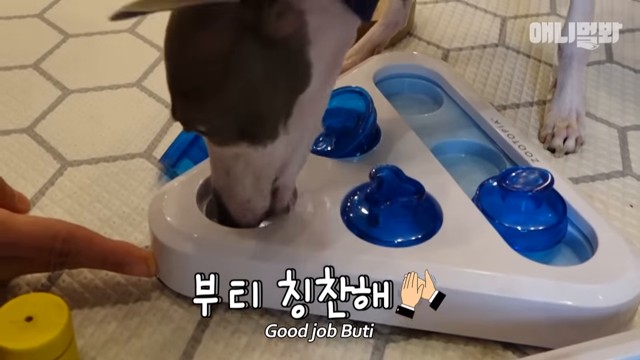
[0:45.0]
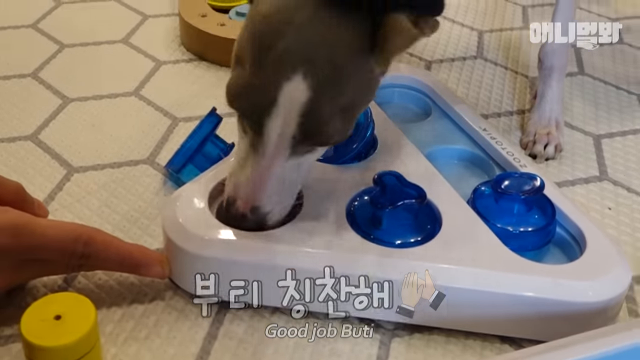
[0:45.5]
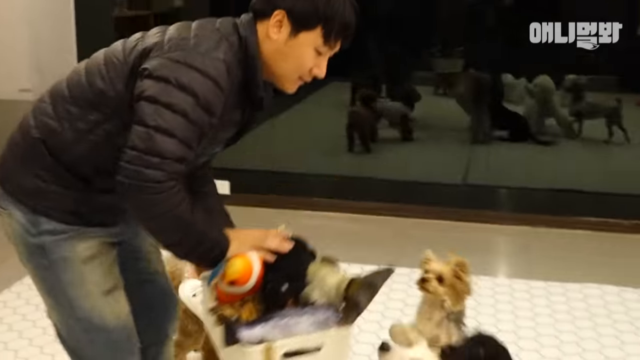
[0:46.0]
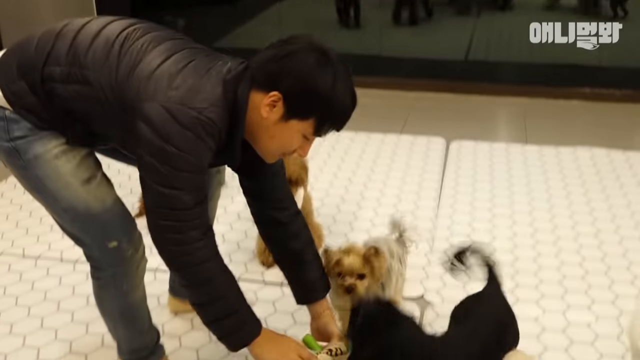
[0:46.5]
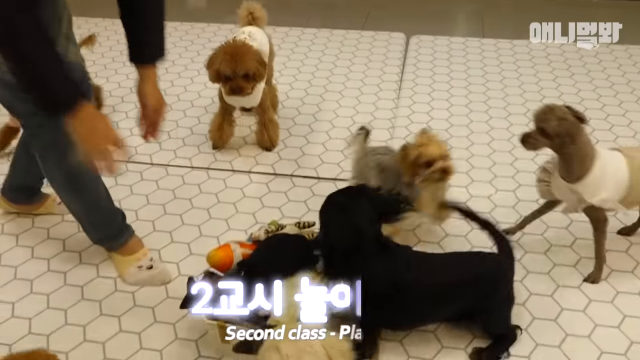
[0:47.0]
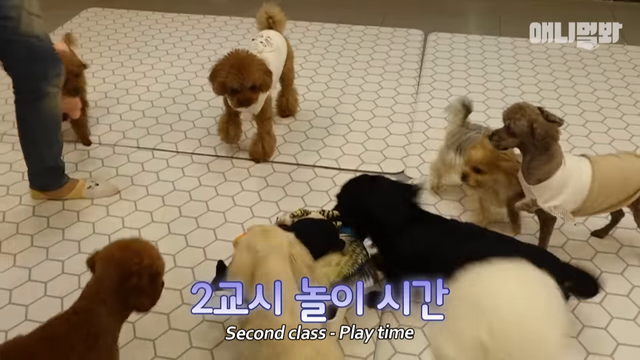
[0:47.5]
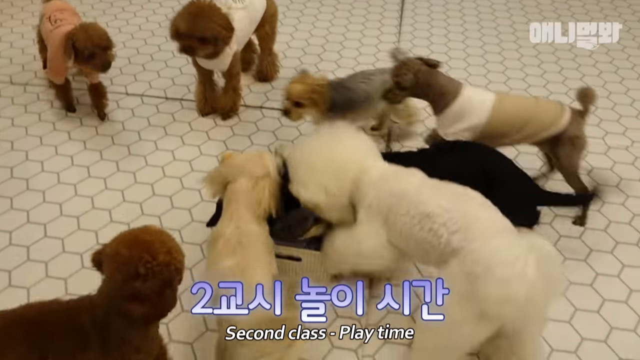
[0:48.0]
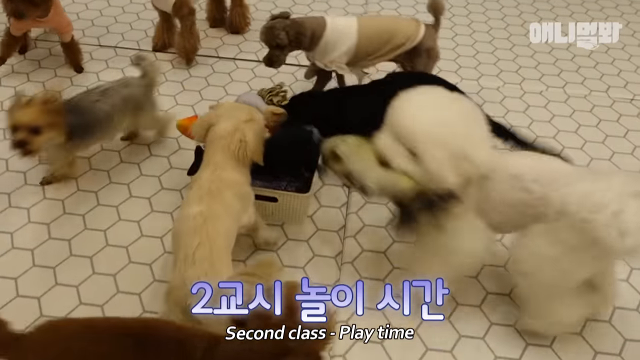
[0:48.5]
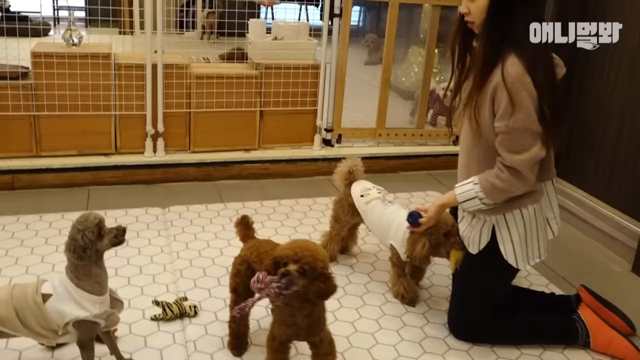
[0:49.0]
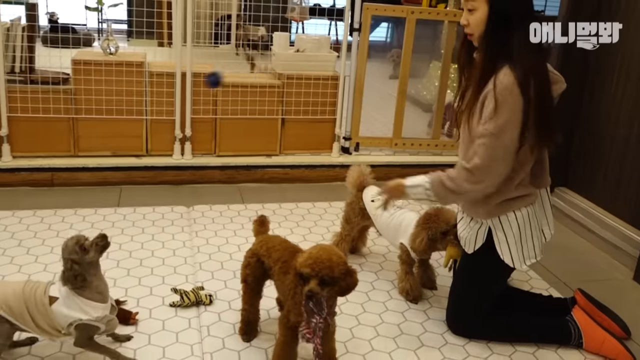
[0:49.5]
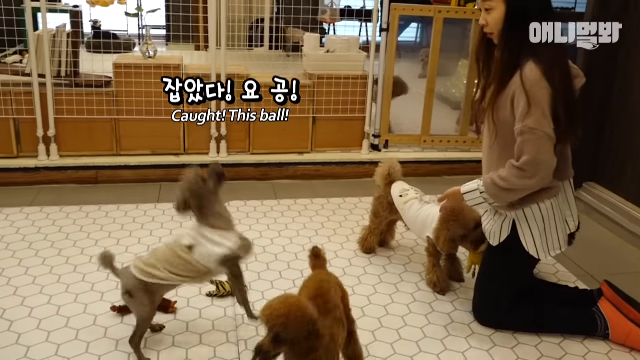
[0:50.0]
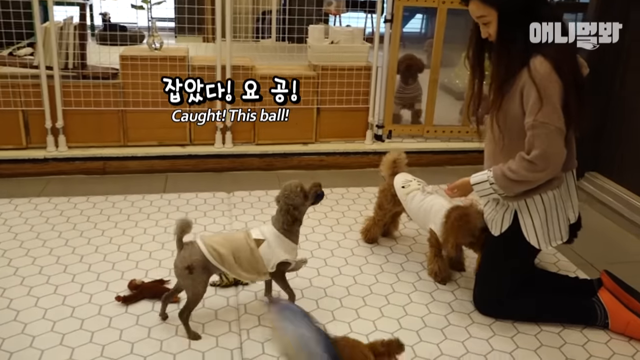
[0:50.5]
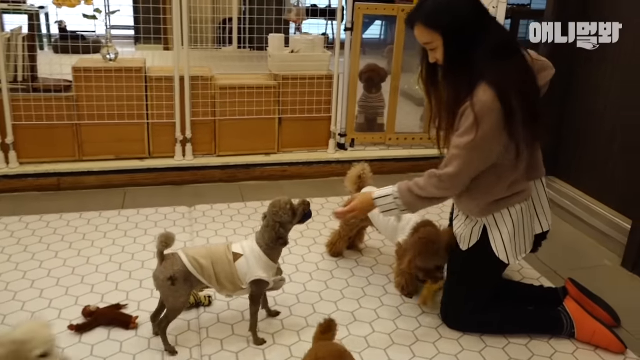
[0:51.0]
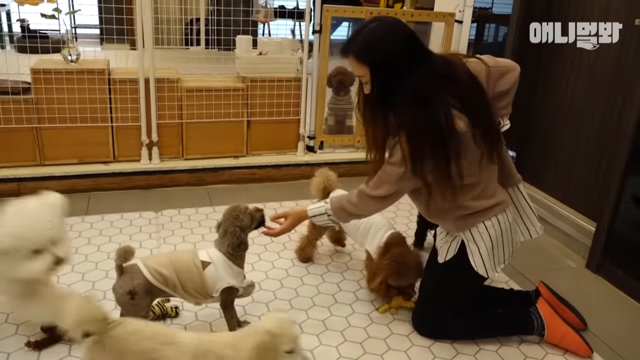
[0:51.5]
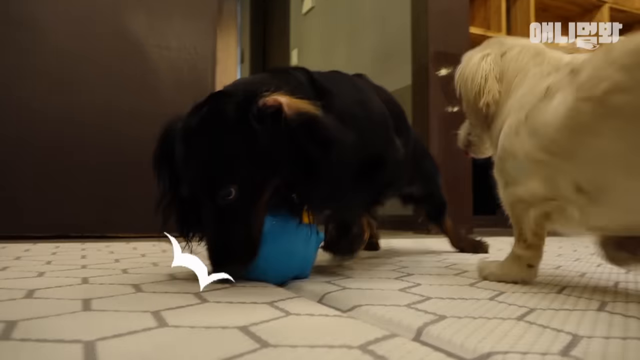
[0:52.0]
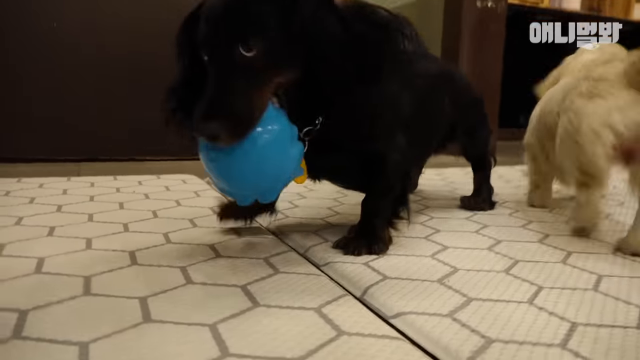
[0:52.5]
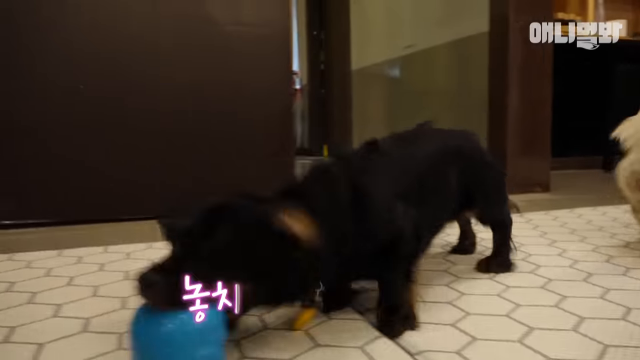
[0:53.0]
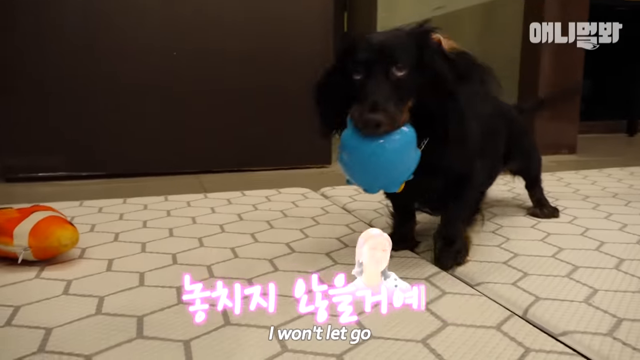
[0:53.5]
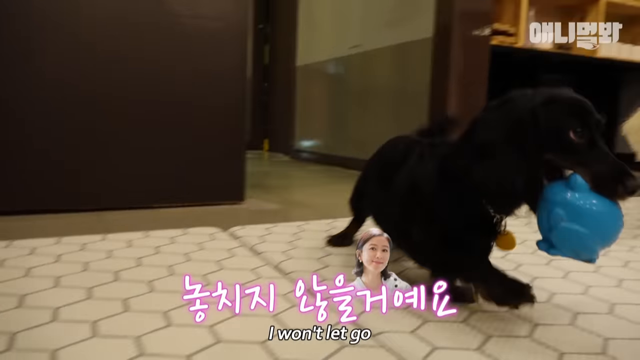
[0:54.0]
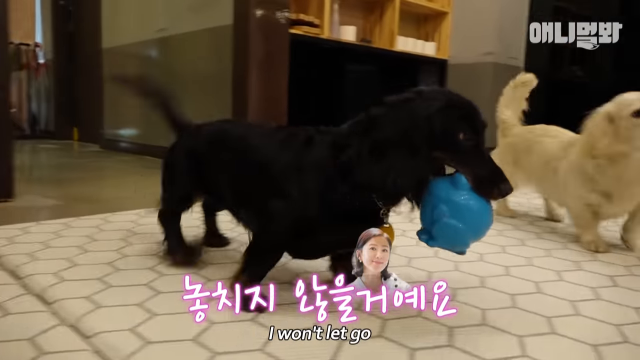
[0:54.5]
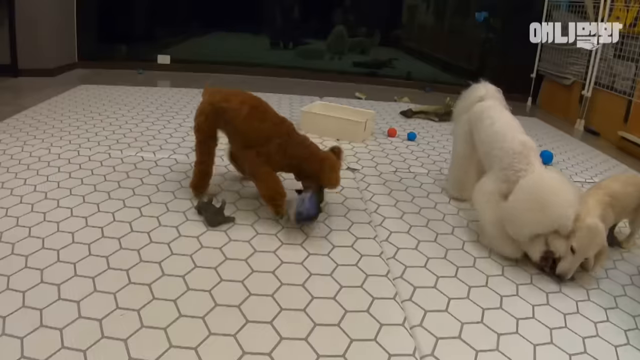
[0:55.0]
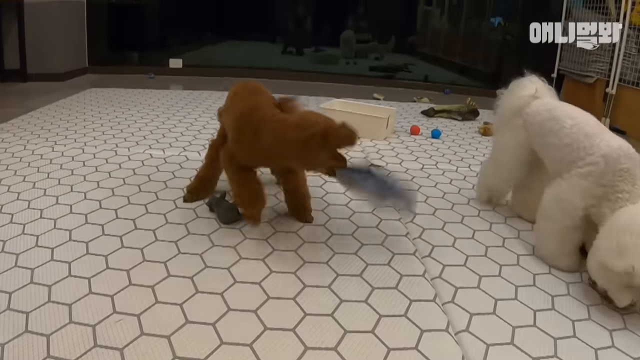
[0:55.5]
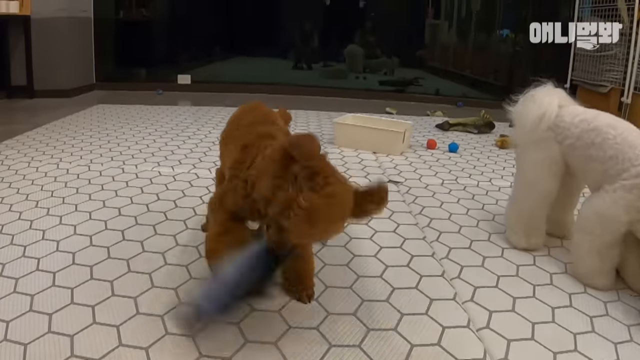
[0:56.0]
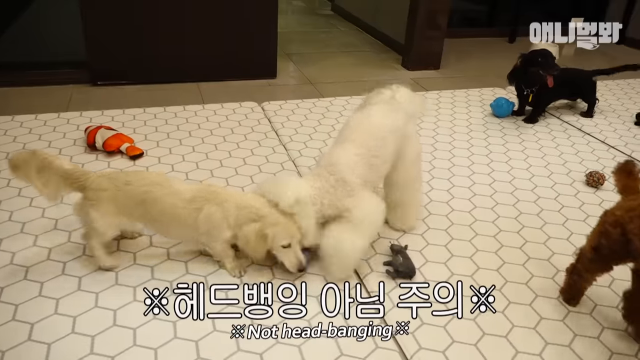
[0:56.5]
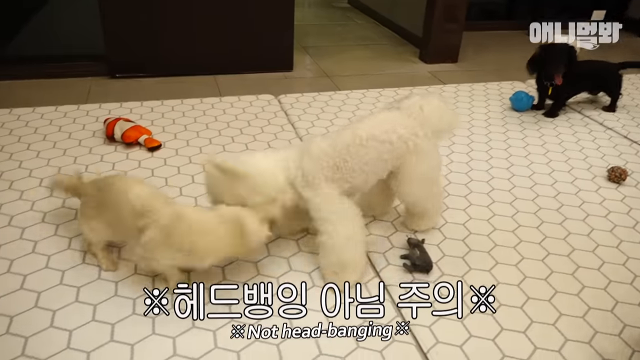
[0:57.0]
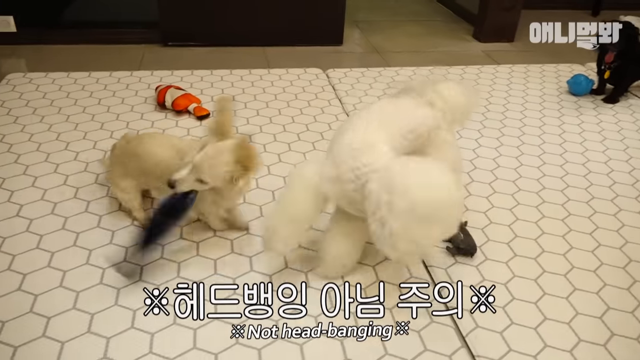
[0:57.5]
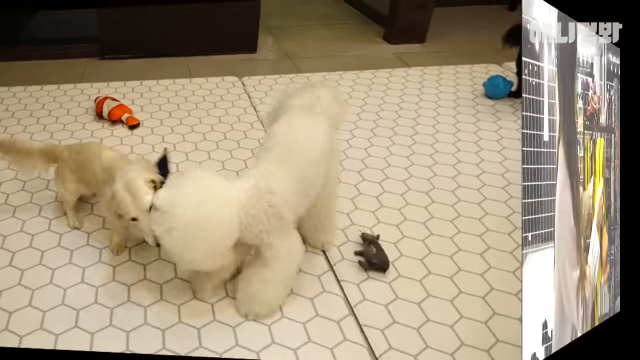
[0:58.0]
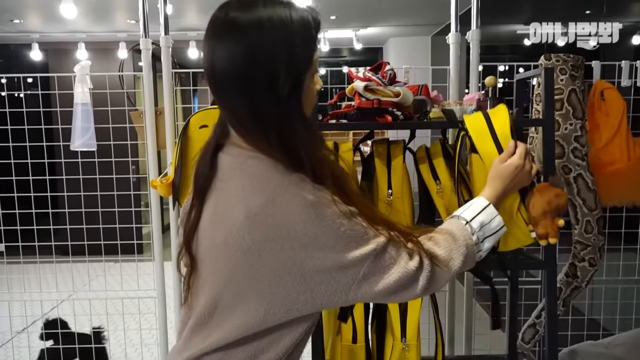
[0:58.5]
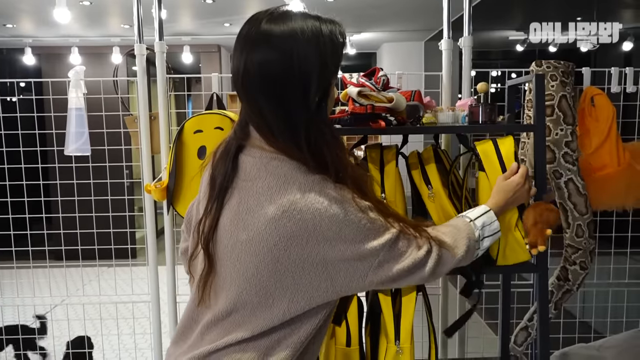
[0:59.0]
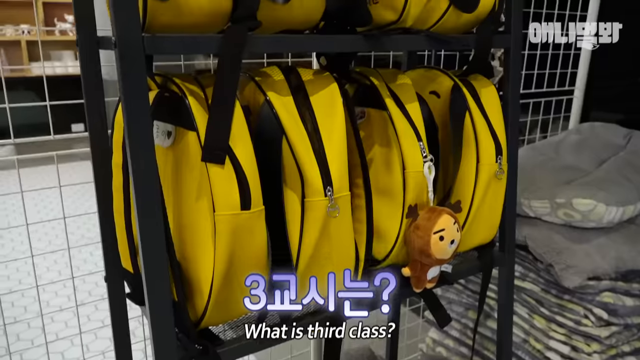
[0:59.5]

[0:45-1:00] A man puts a box down in front of several dogs, maybe a dozen, of all kinds of different breeds. They are all fairly small and might be puppies. The dogs are having a blast with lots of different toys on the ground, grabbing the toys in their mouths and throwing them around. A female teacher tosses a toy and another dog catches it in its mouth. A small black dog carries a blue ball around. At the end, the female teacher picks up some small yellow bags.